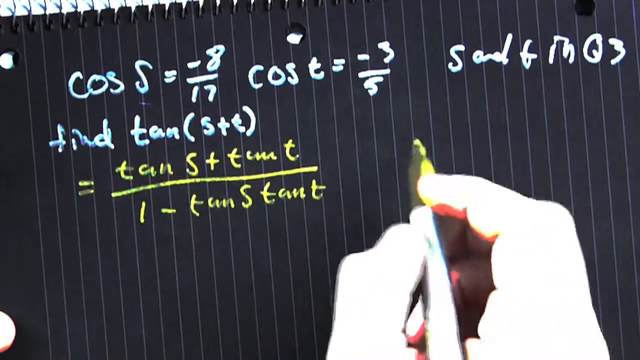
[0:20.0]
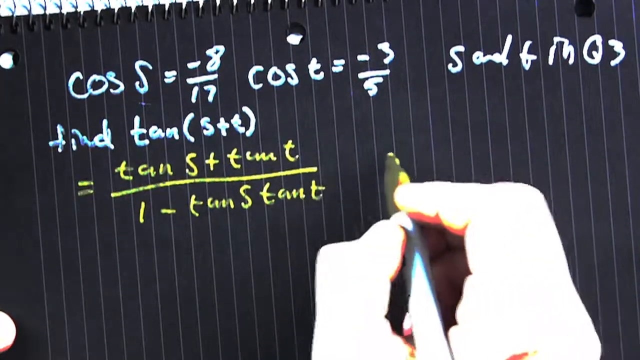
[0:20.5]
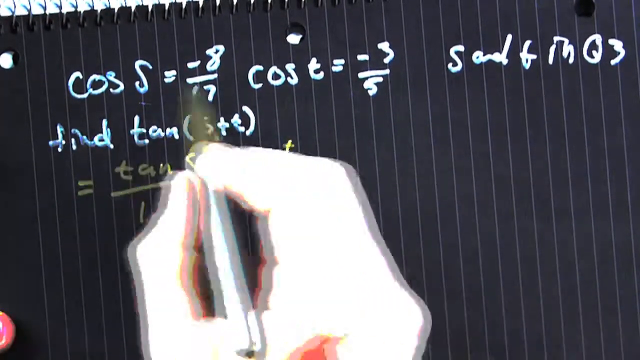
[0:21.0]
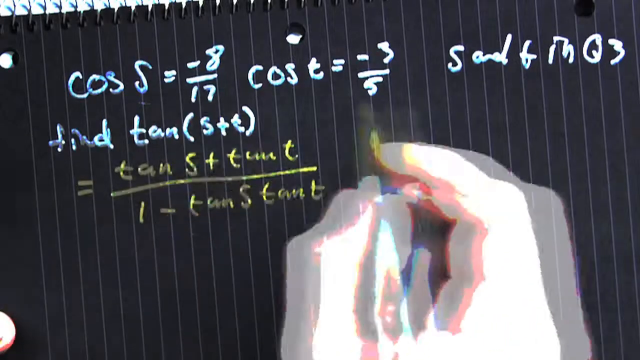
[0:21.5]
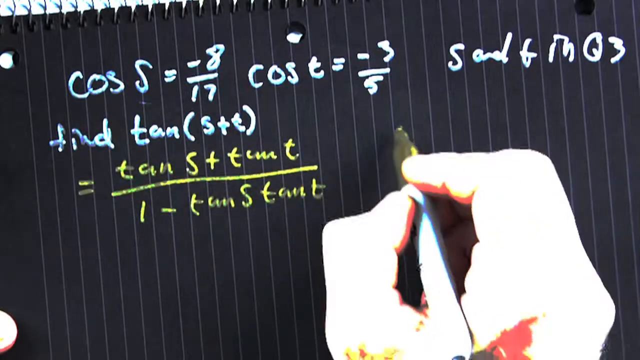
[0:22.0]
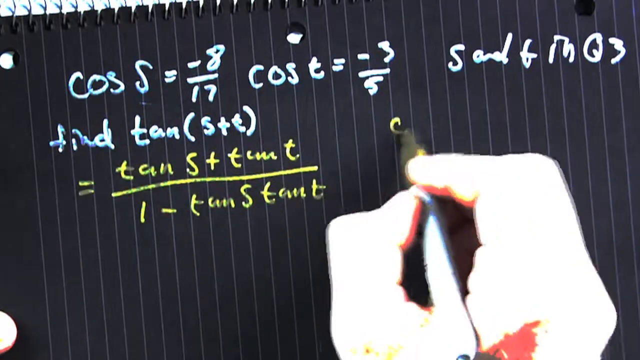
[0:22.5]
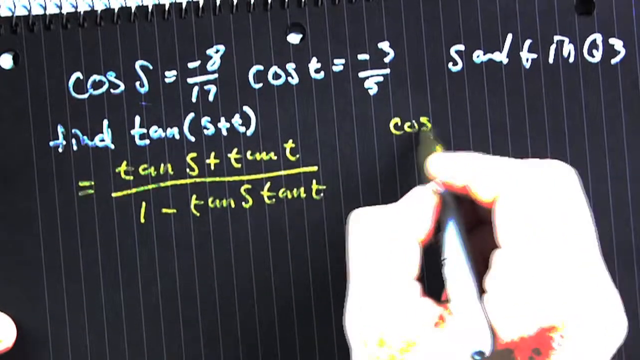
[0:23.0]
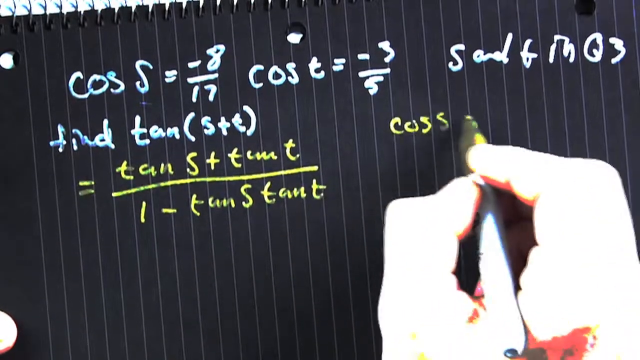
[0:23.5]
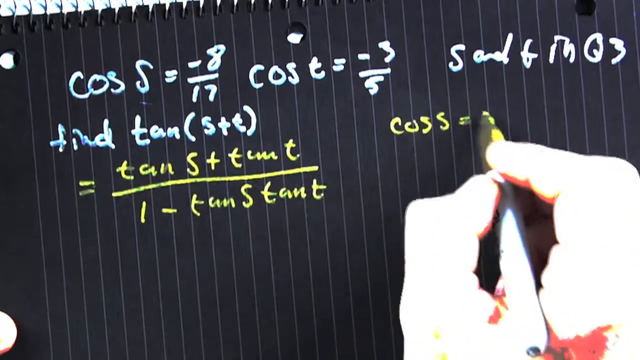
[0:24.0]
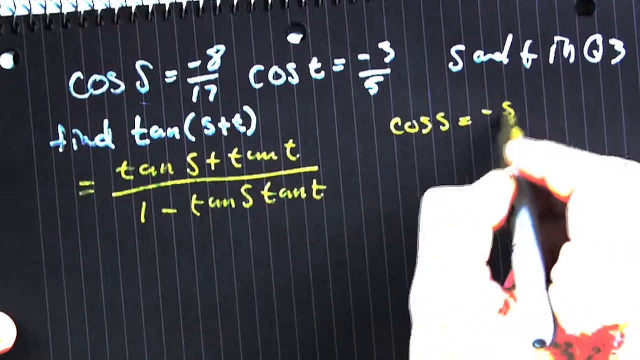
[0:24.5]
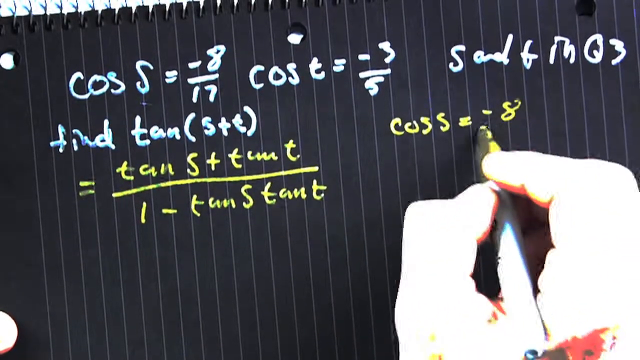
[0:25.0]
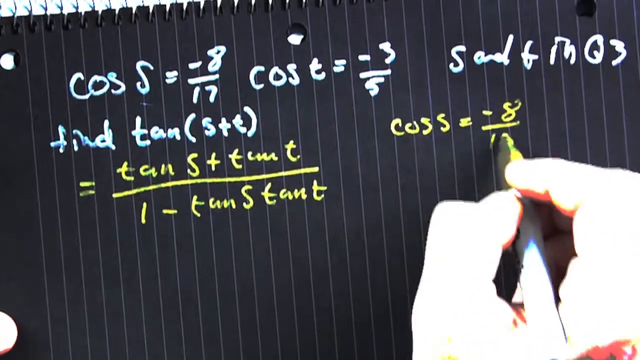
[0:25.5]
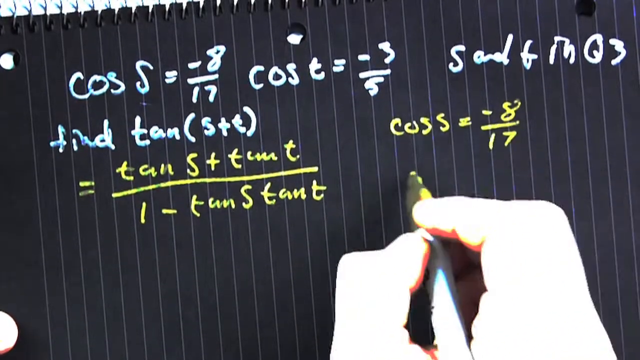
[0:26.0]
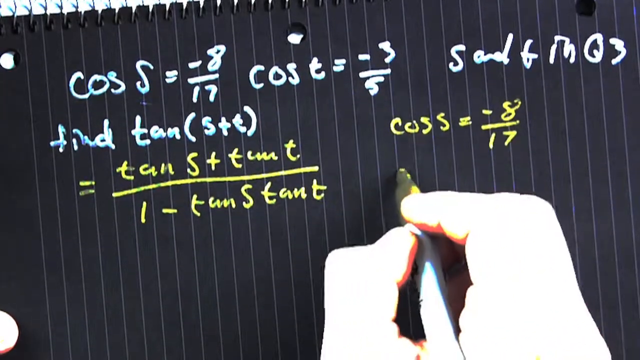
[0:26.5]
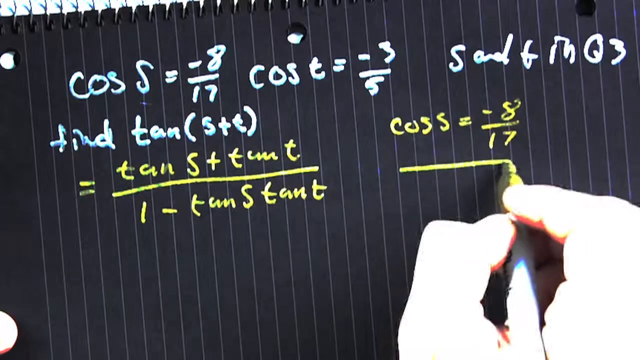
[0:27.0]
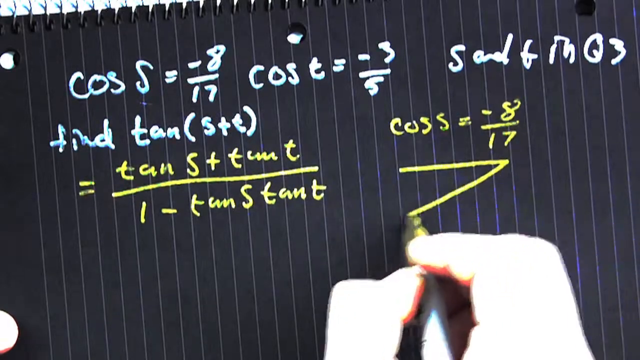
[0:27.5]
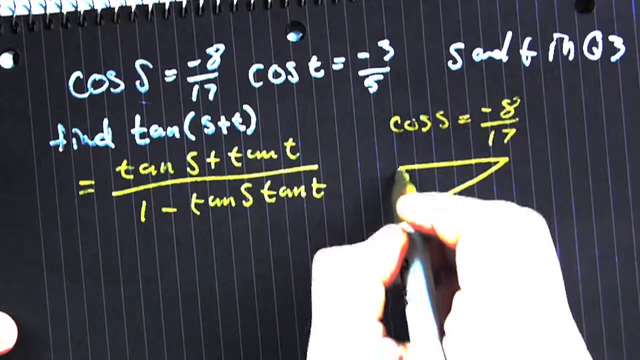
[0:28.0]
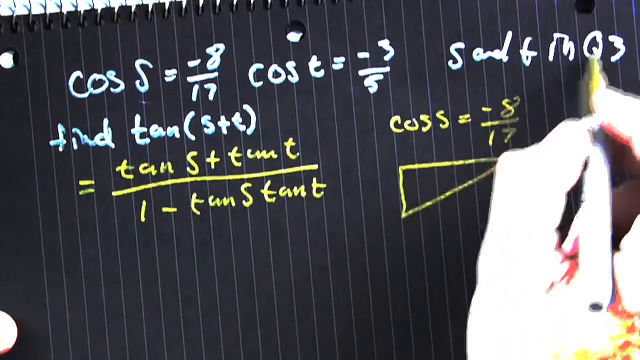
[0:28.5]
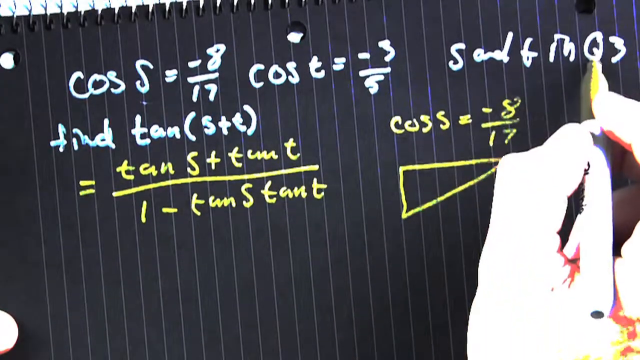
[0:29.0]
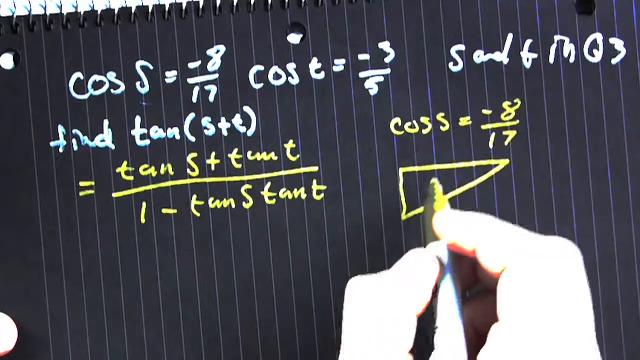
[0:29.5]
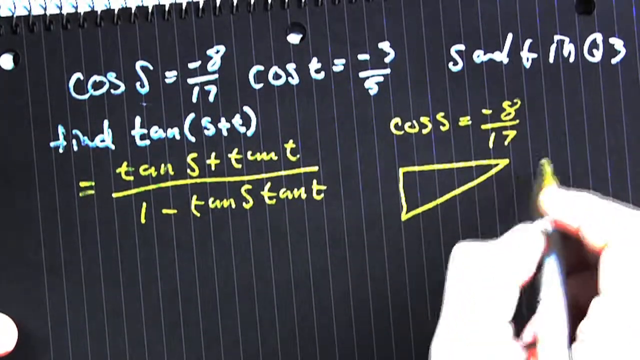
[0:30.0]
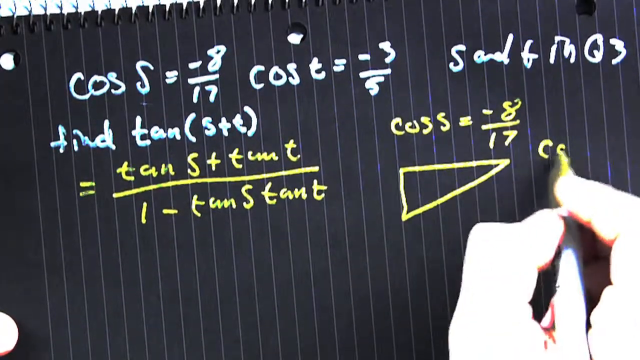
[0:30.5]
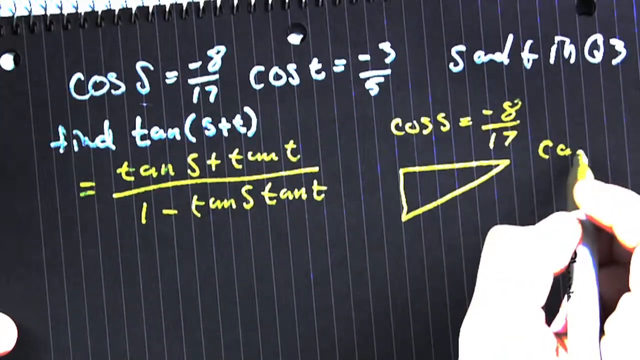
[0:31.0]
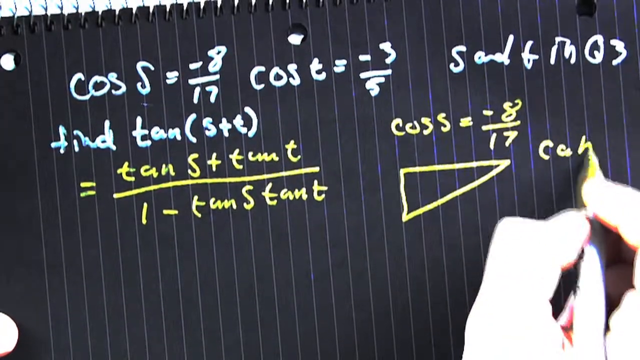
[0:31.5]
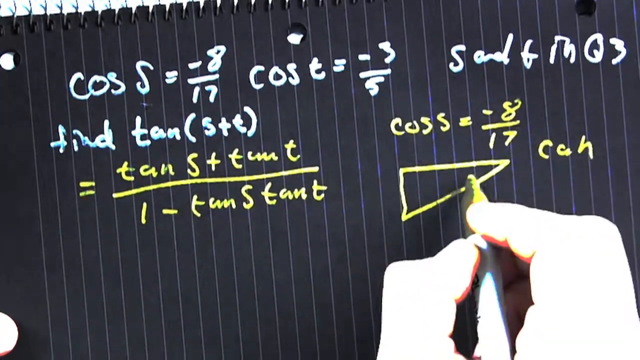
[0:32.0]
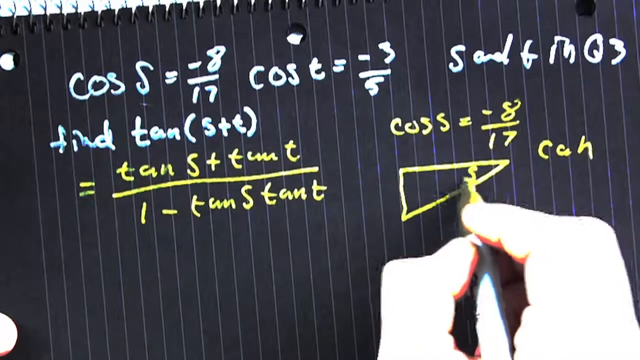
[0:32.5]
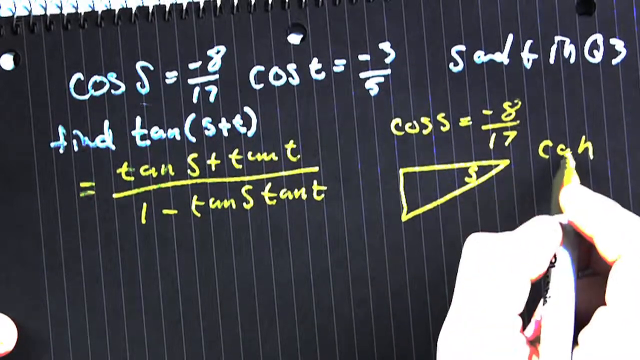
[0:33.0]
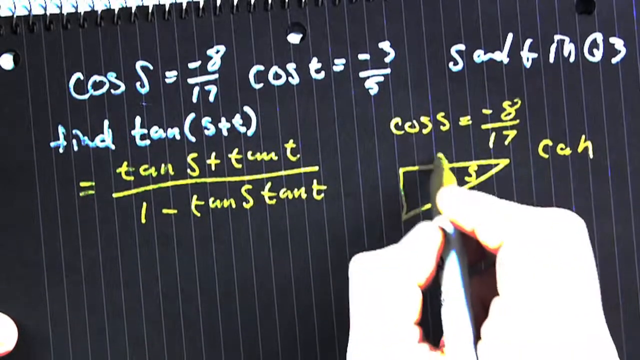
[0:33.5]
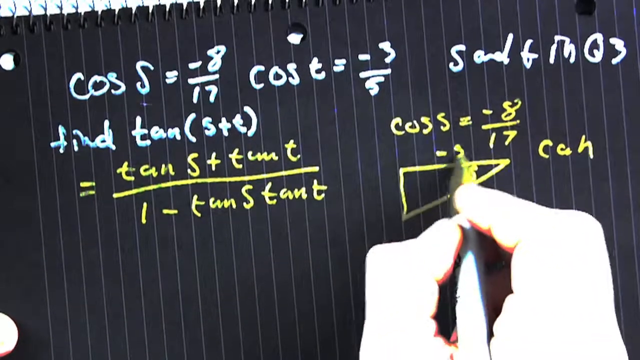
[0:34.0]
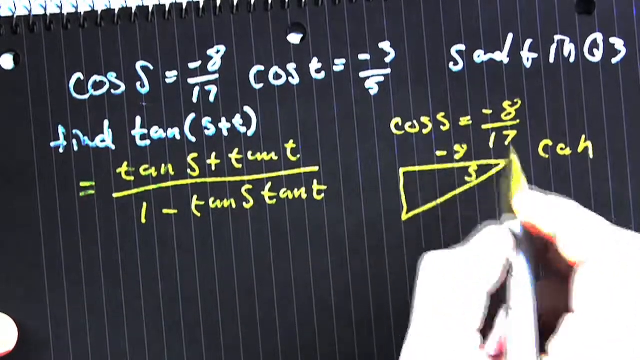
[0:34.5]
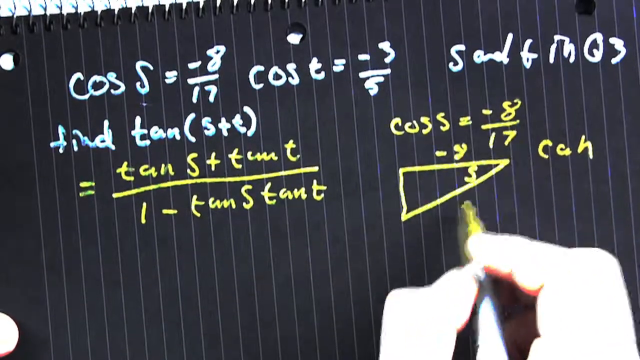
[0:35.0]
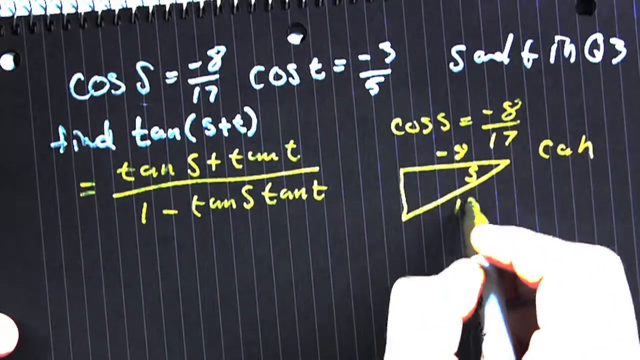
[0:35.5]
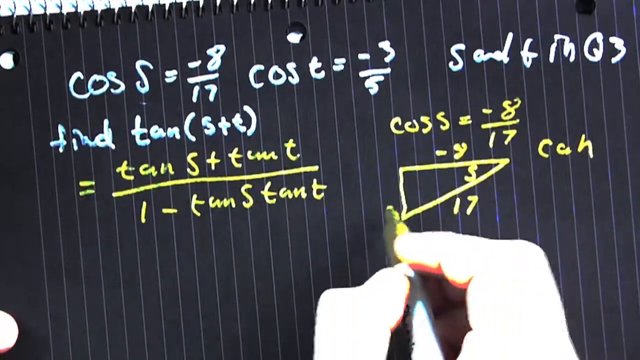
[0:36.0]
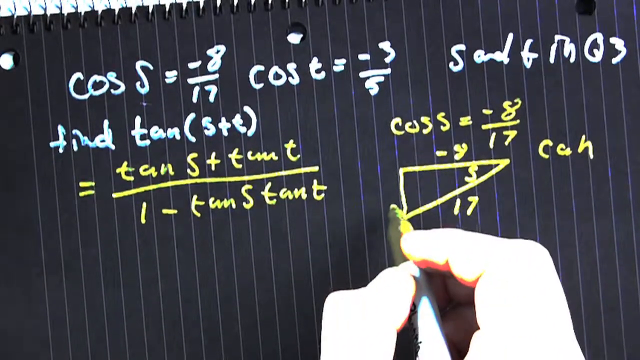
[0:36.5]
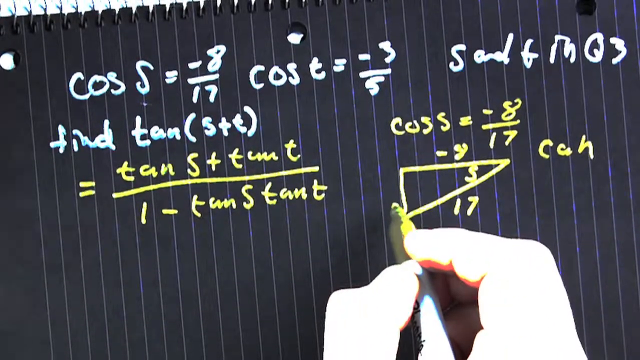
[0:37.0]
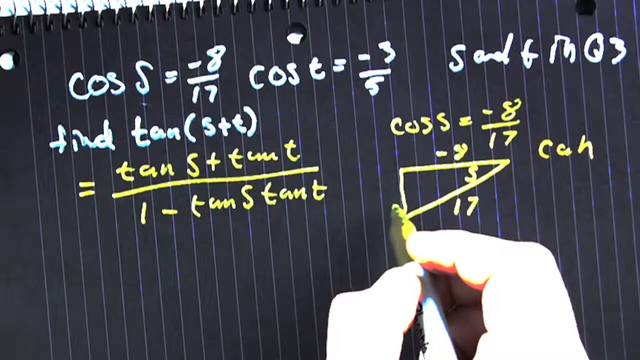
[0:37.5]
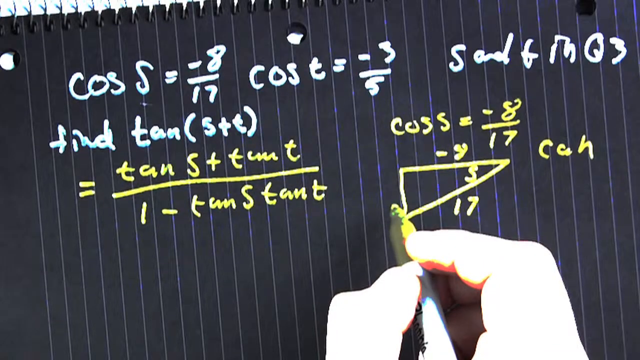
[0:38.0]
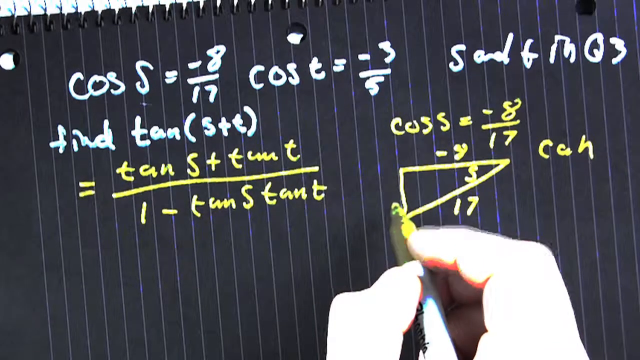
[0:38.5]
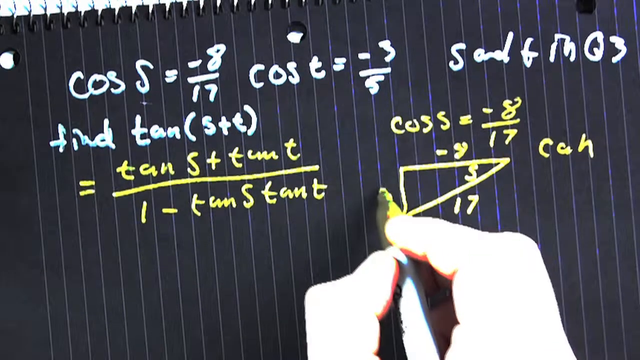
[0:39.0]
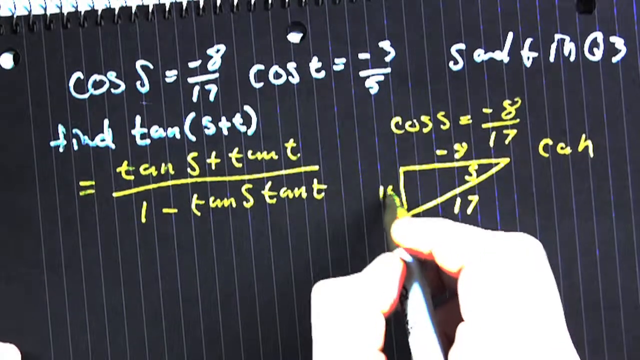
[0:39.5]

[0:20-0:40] The man continues his formula and writes the details again: cosine s is minus 8 to 17, and cosine t is minus 3 to 5. The formula he wrote earlier is visible. He writes cosine s as minus 8 to 17 on the paper, then draws a triangle and writes the task's data on it: the numbers minus 8, 17 and 15. He apparently uses this triangle to answer the question with Pythagoras. He writes on the black paper, and the letters and numbers he writes are clearly visible.